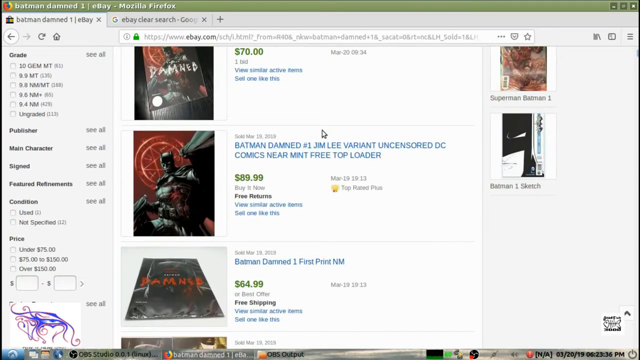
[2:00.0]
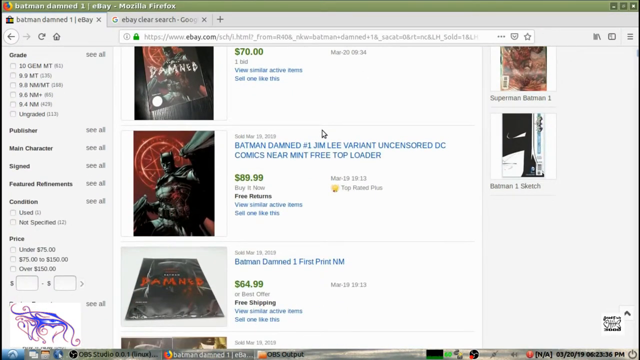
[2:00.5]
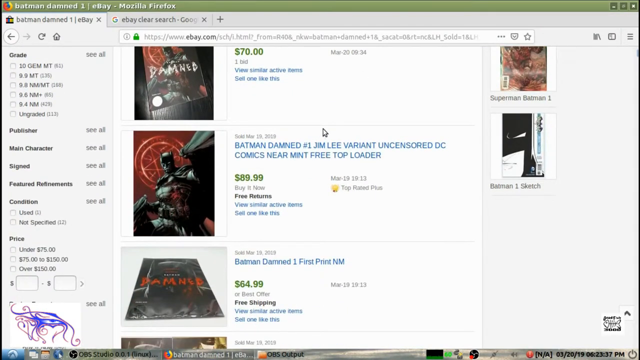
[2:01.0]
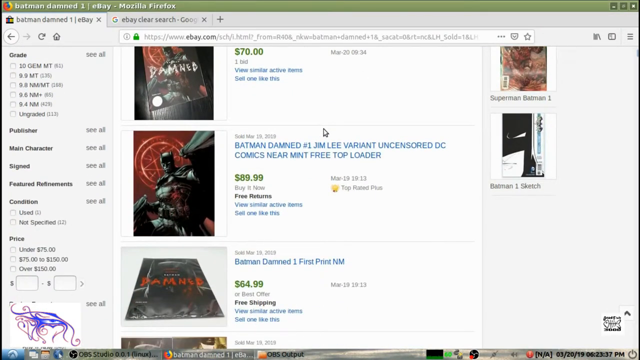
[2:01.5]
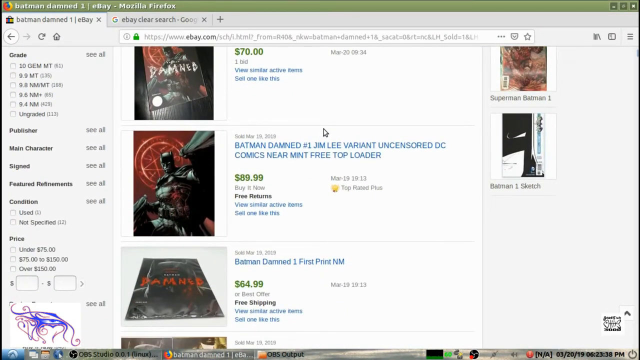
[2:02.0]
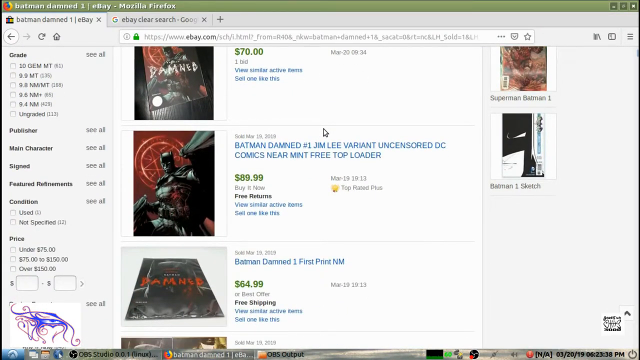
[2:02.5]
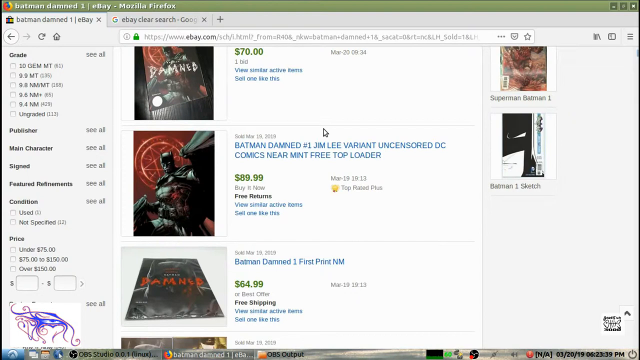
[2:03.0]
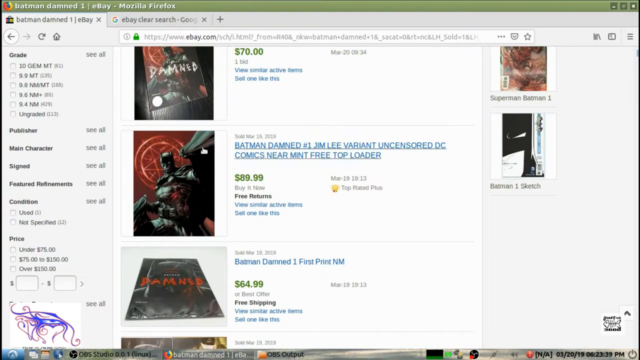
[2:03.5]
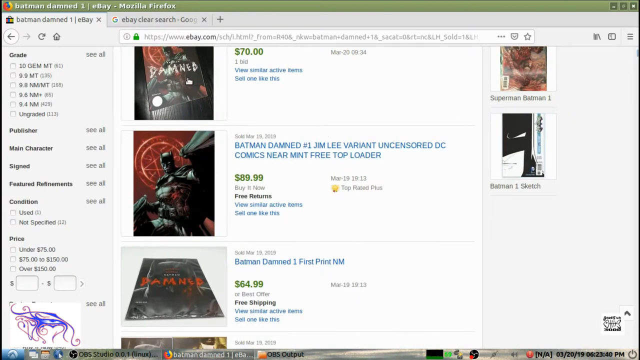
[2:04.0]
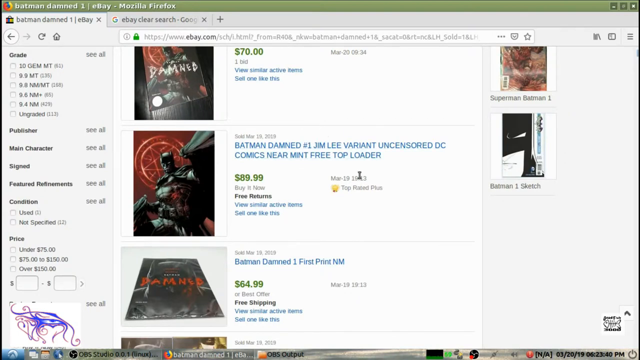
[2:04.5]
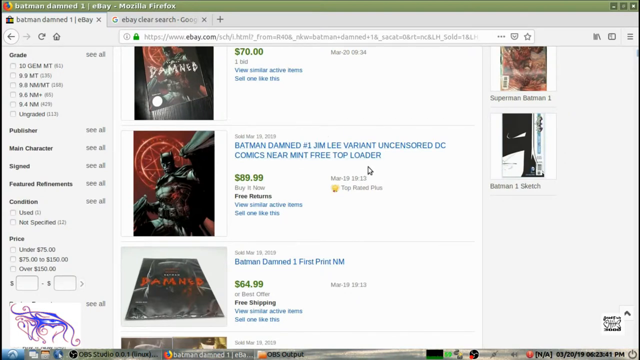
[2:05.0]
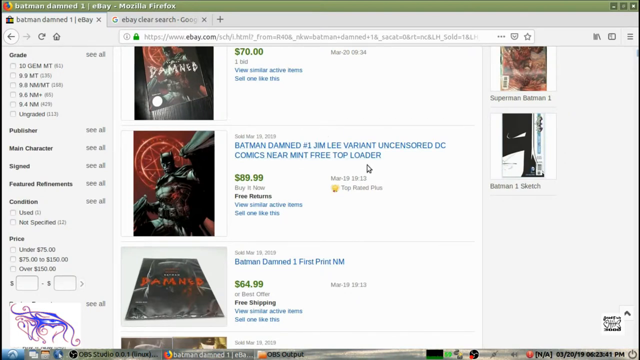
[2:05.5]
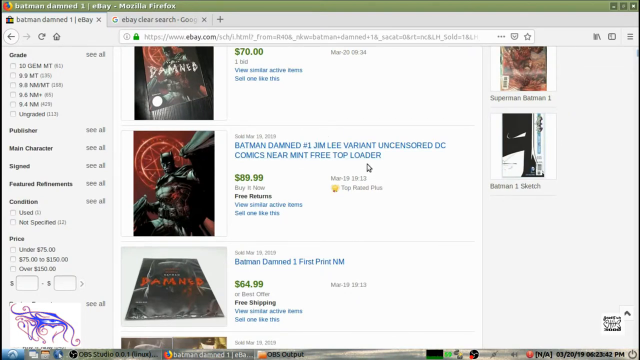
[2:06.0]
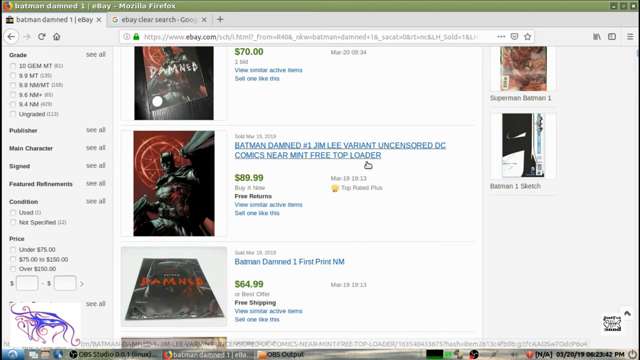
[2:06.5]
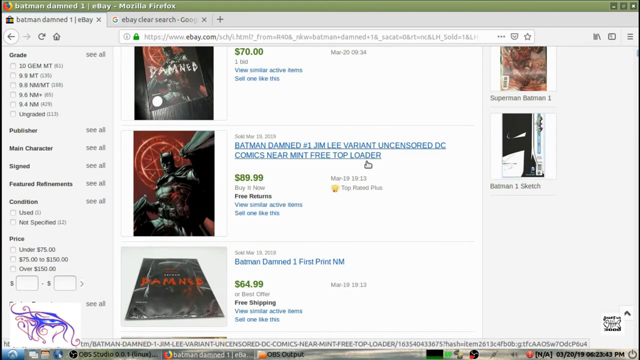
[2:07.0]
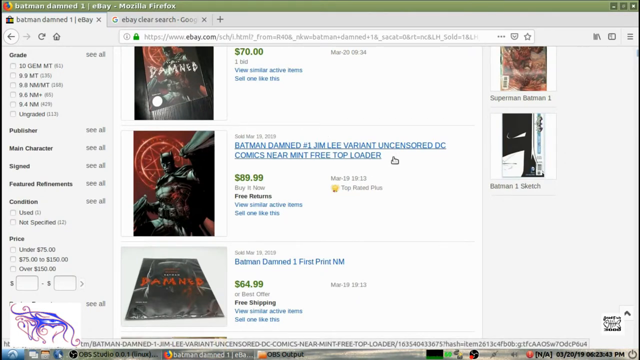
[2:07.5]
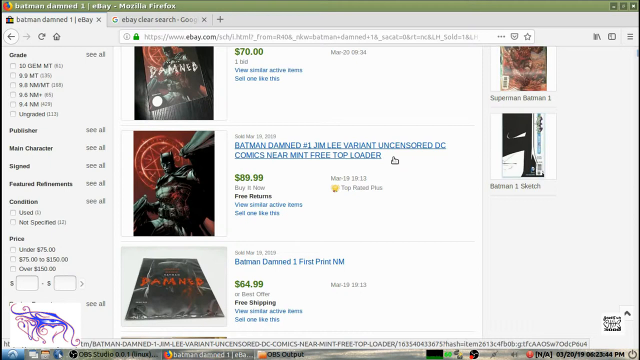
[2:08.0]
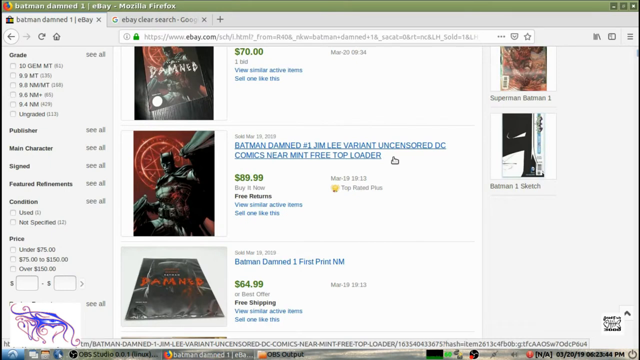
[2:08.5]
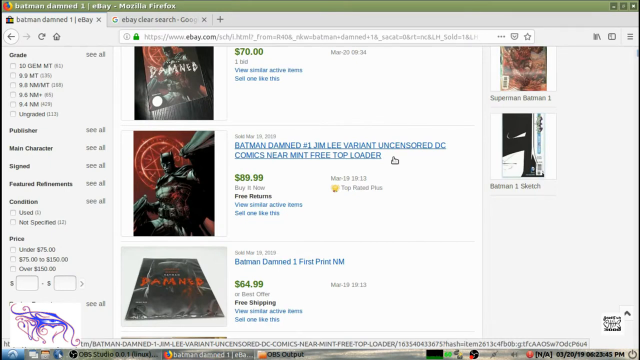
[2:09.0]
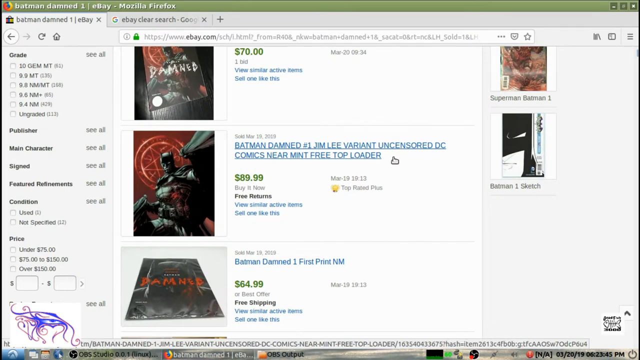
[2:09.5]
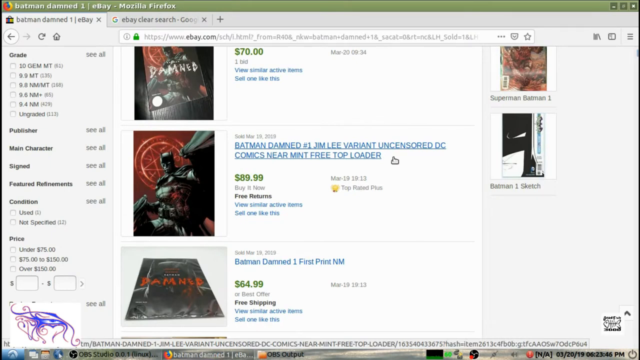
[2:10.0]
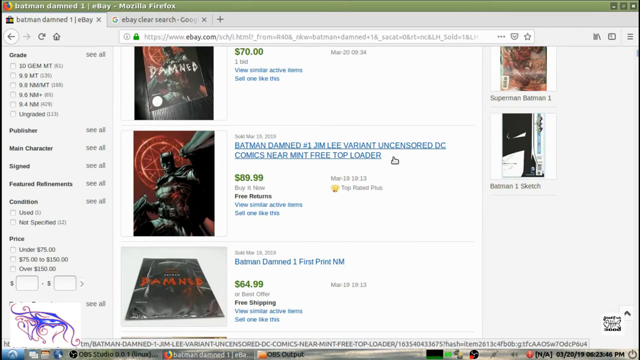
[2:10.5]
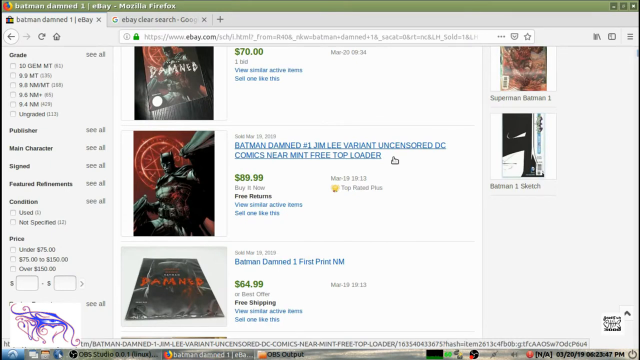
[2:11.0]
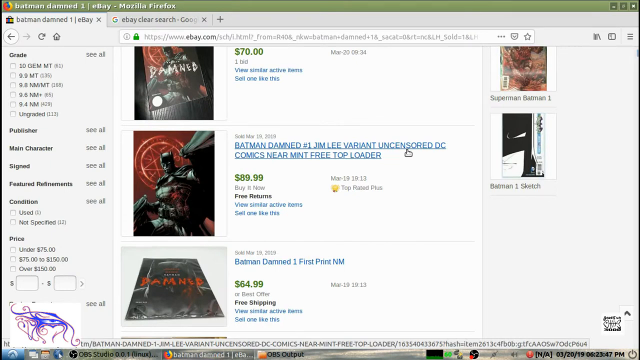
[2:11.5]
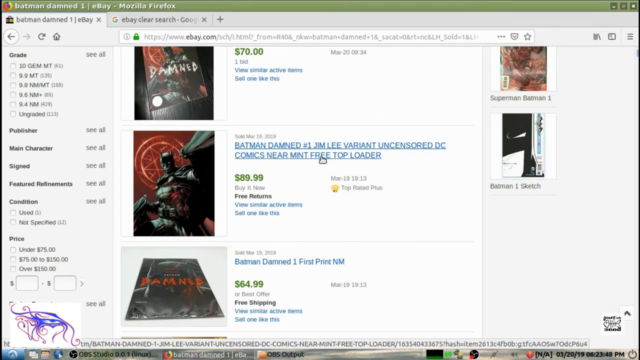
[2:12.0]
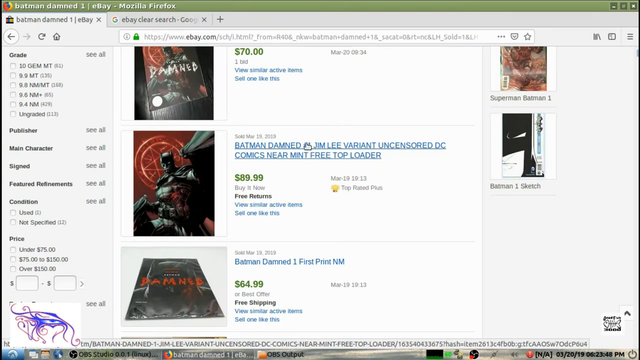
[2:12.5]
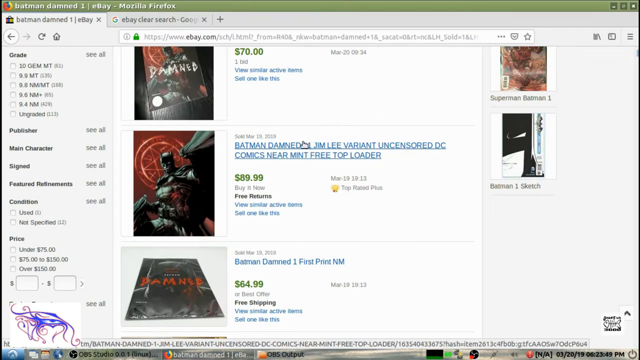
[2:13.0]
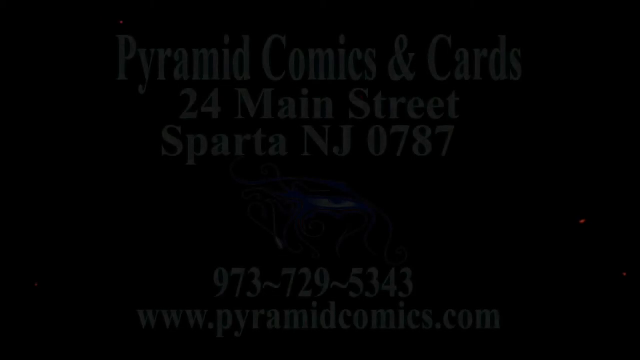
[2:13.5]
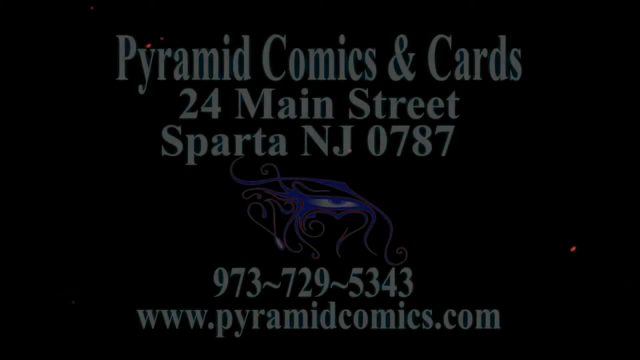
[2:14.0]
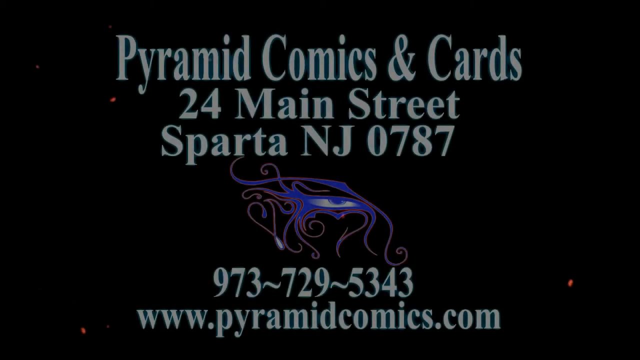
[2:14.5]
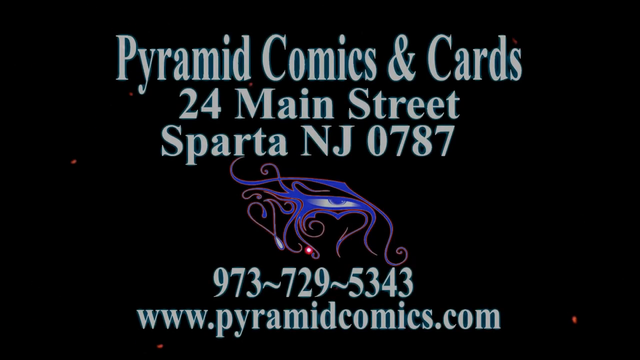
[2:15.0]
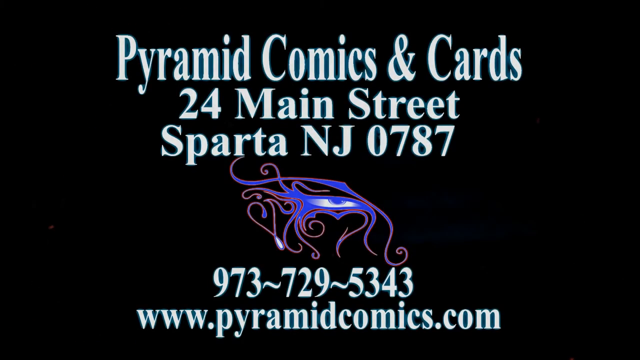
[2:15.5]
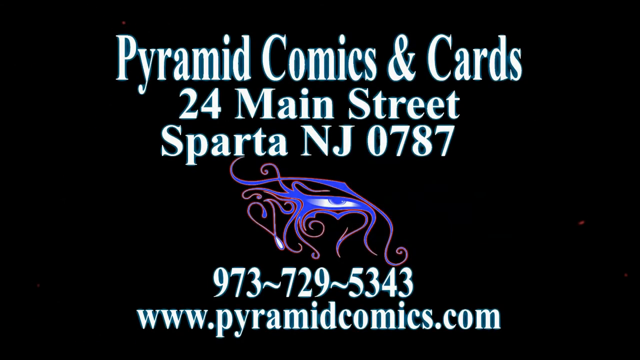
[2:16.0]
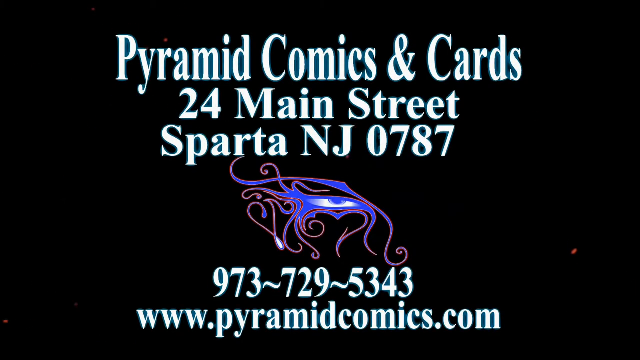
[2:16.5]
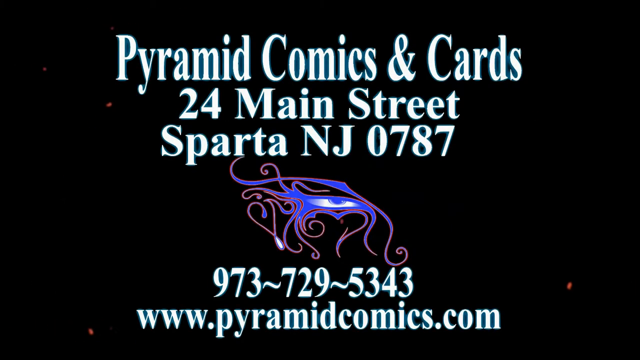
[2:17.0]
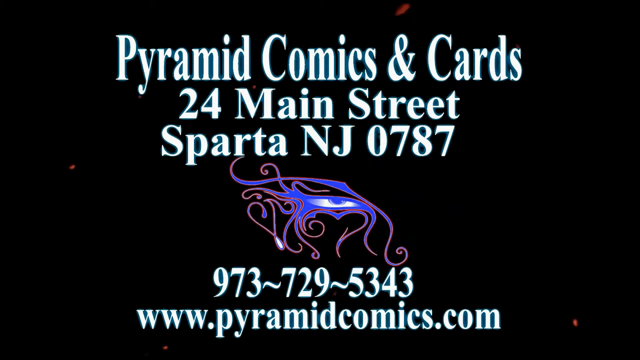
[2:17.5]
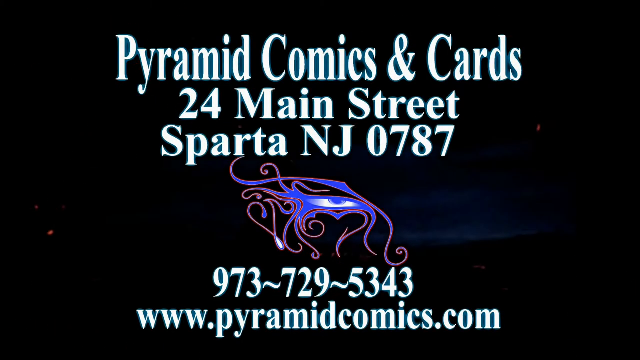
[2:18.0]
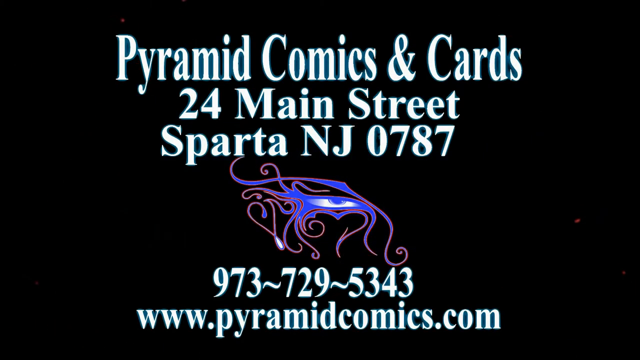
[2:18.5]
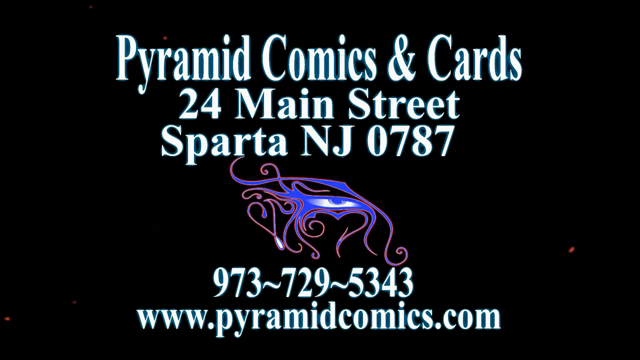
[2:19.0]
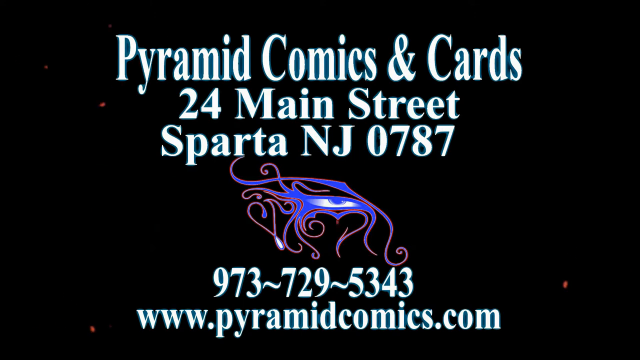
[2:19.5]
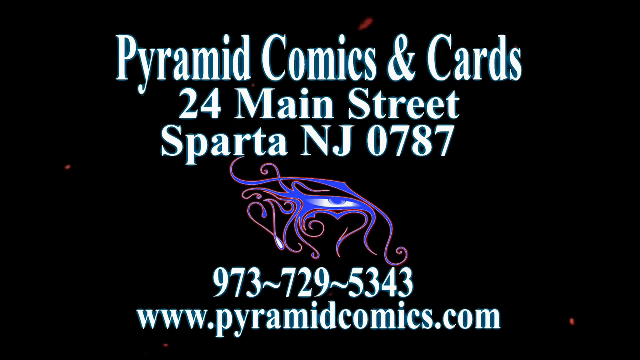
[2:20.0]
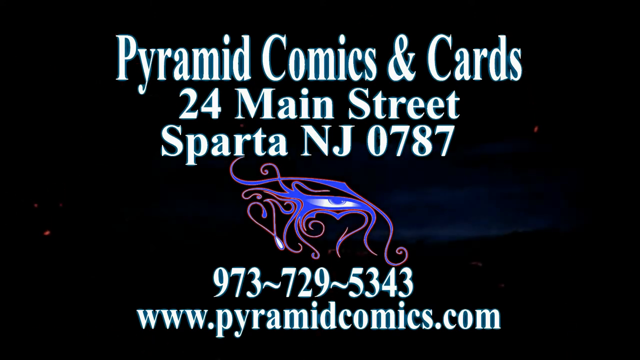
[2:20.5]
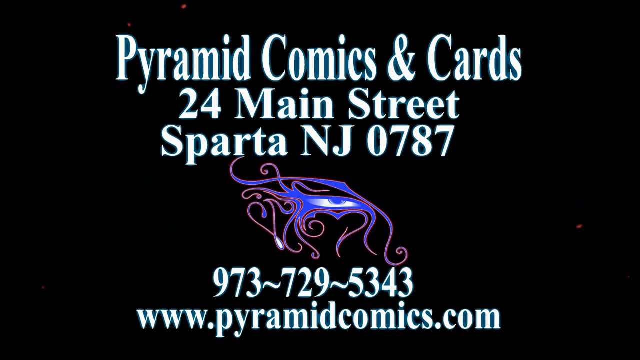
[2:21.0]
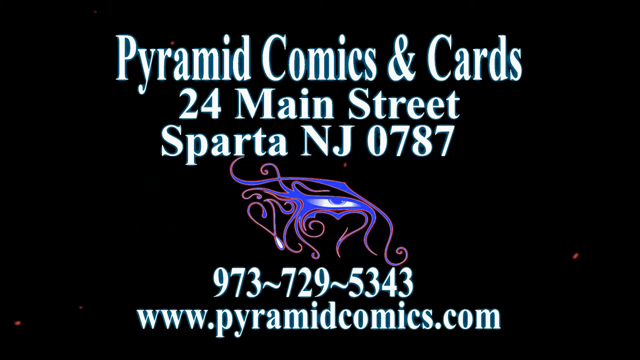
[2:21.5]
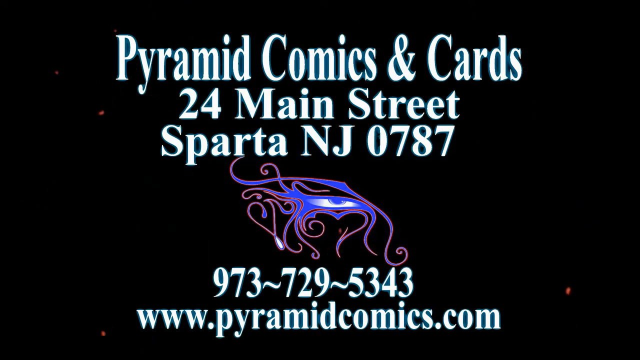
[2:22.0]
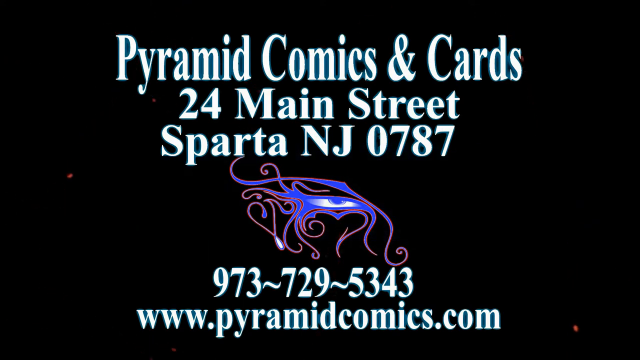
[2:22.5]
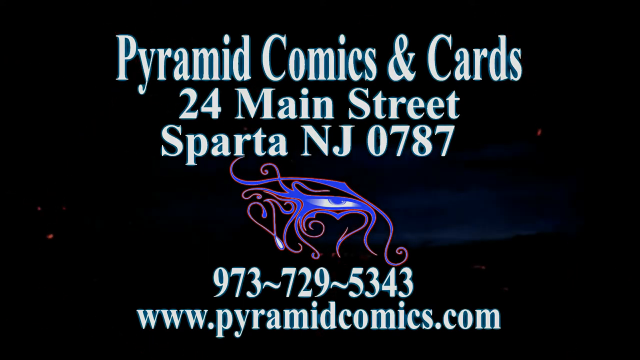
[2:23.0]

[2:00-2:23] The mouse pointer is over the second result, whose title says "Batman Damned Number One Jim Lee Variant Uncensored DC Comics Near Mint Top Three Loader." The user moves the pointer toward the front cover pictures of both comic books, then to the right side to hover over the title of the second result, and then slightly further right to the center of that title. The scene then changes to show a business called Pyramid Comics and Cards at the top, with its address below: 24 Main Street, Sparta, New Jersey, 0787. At the bottom are the business's telephone number, 973-729-5343, and below it the website, www.pyramidcomics.com. In the middle is a logo of a purple eye looking toward the viewer, with curve-like design patterns around it that form the left half of a face.